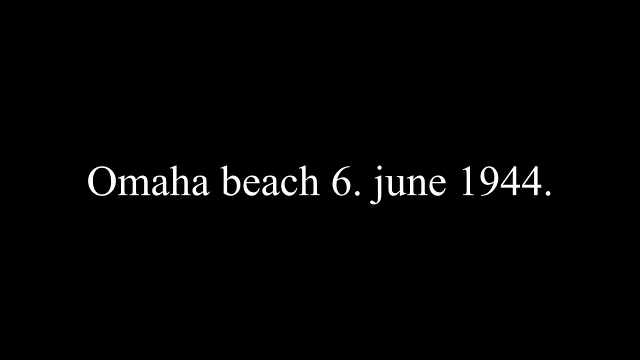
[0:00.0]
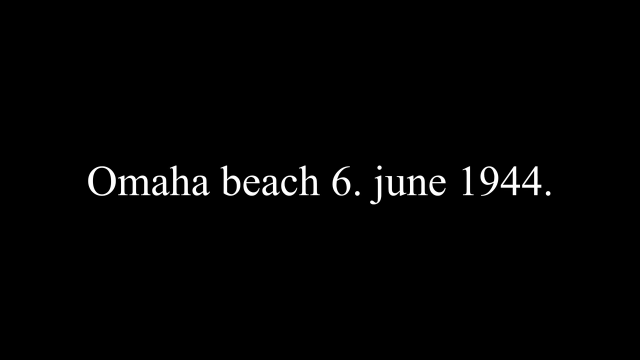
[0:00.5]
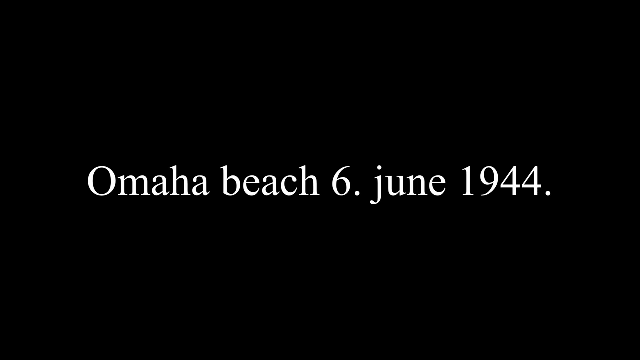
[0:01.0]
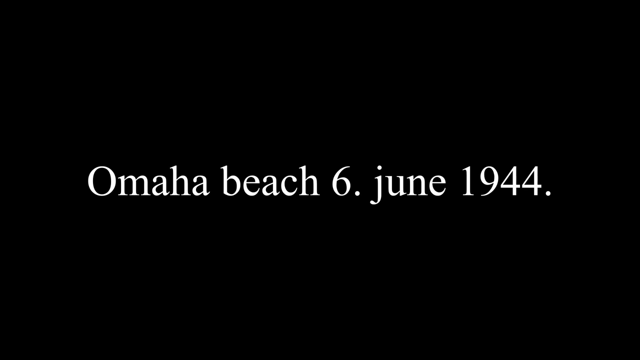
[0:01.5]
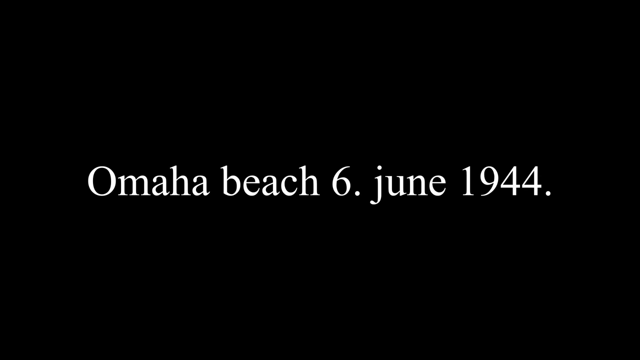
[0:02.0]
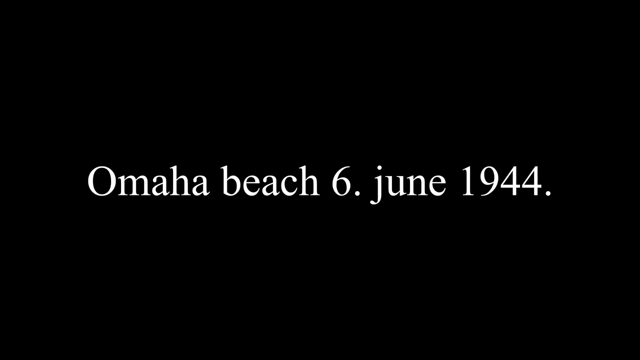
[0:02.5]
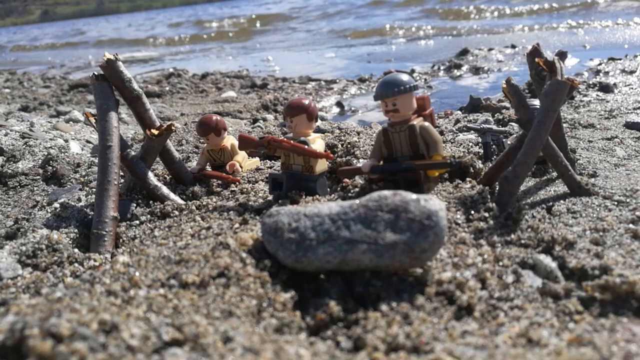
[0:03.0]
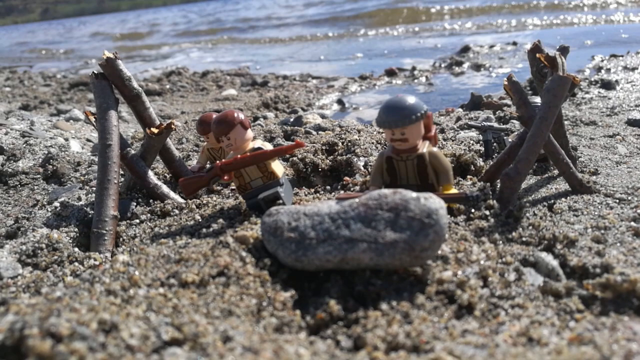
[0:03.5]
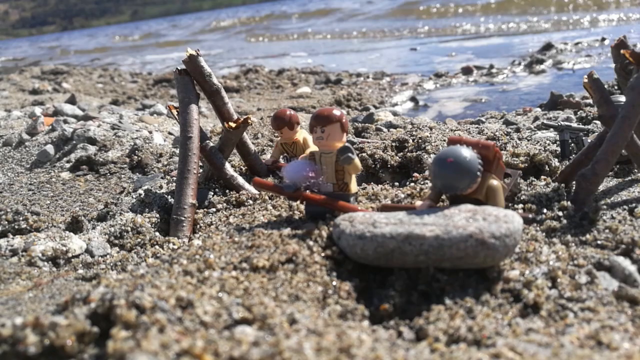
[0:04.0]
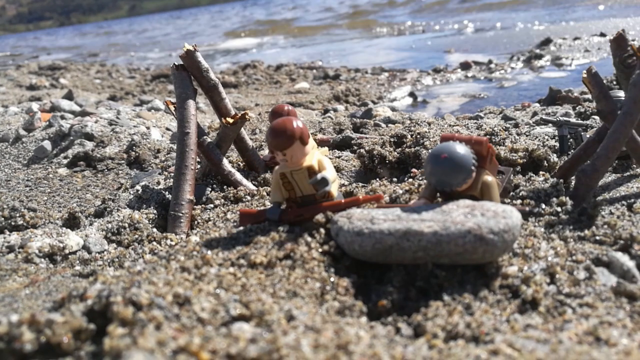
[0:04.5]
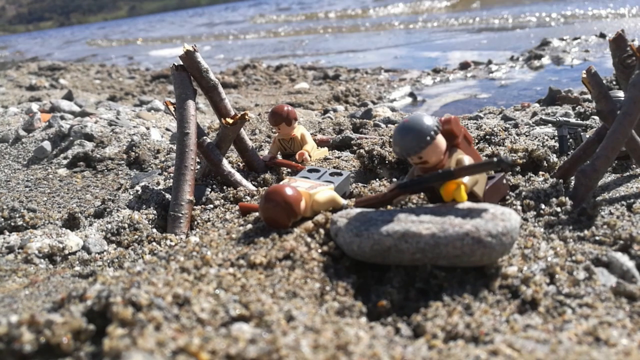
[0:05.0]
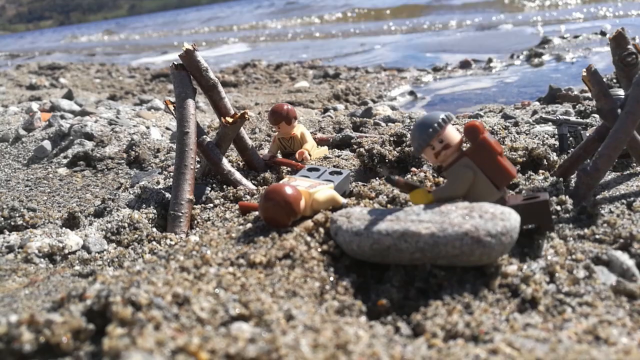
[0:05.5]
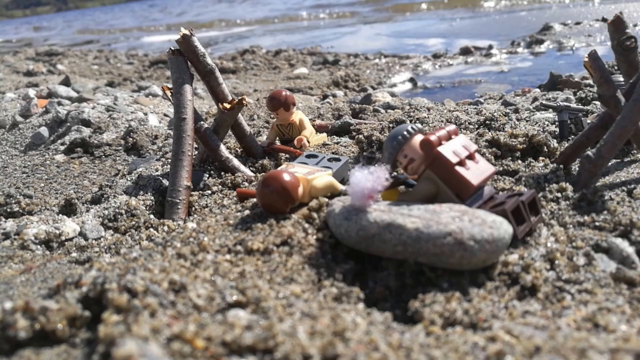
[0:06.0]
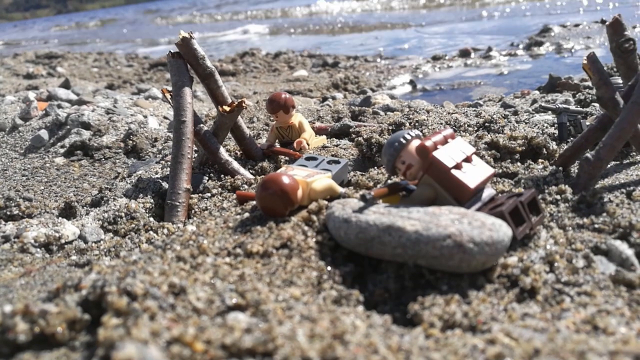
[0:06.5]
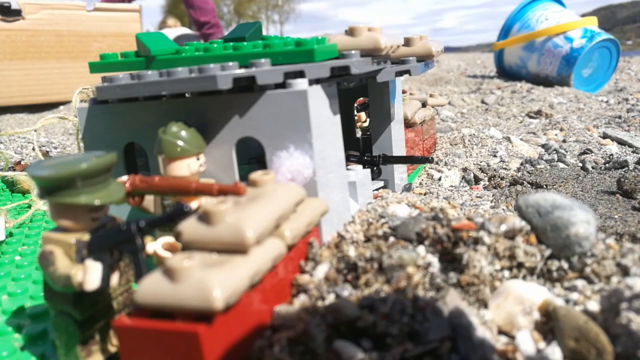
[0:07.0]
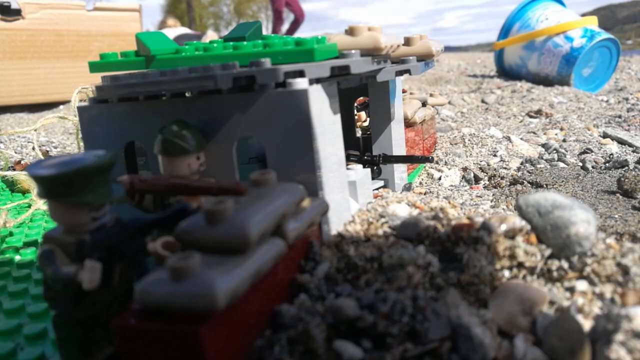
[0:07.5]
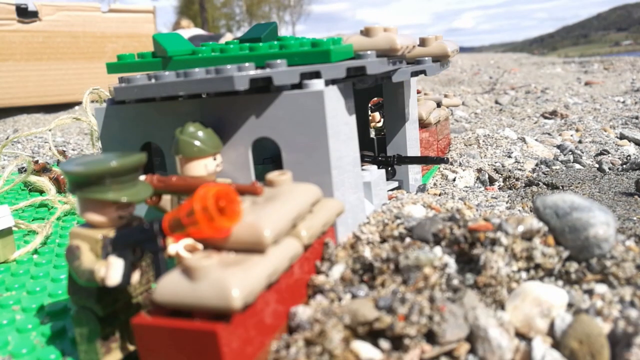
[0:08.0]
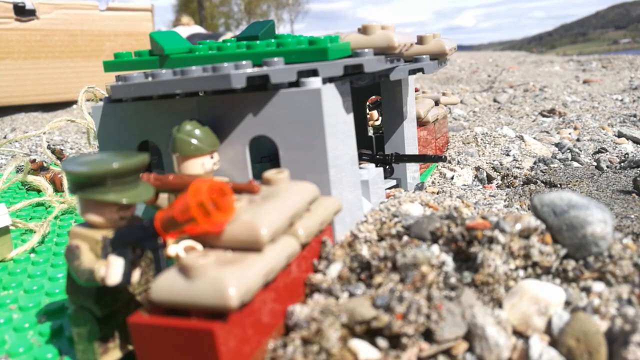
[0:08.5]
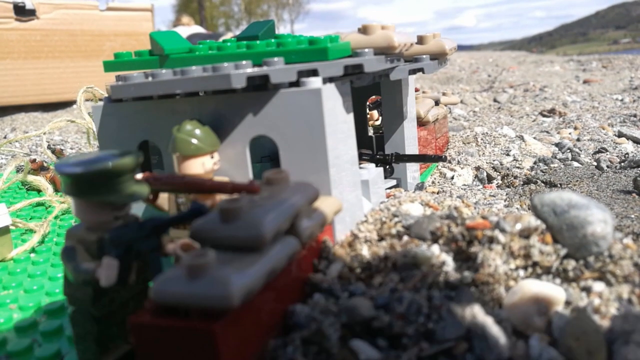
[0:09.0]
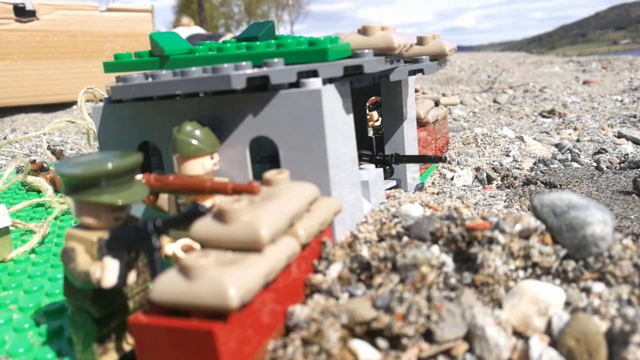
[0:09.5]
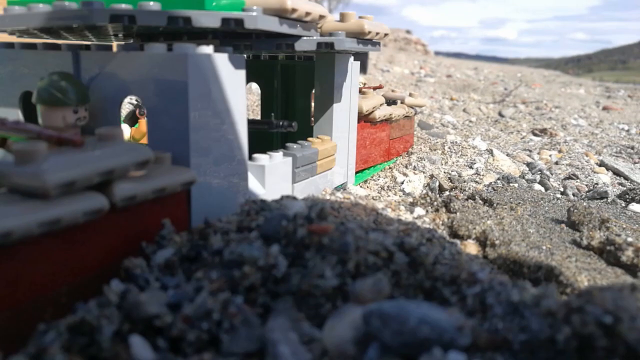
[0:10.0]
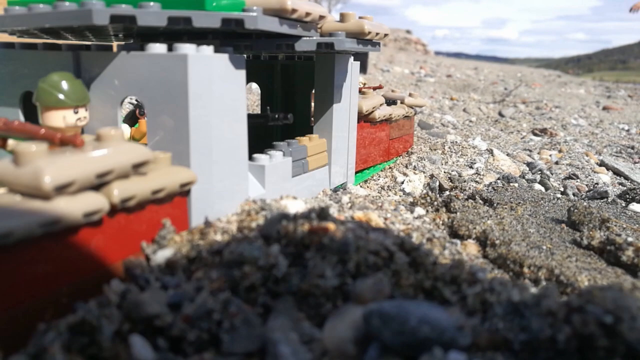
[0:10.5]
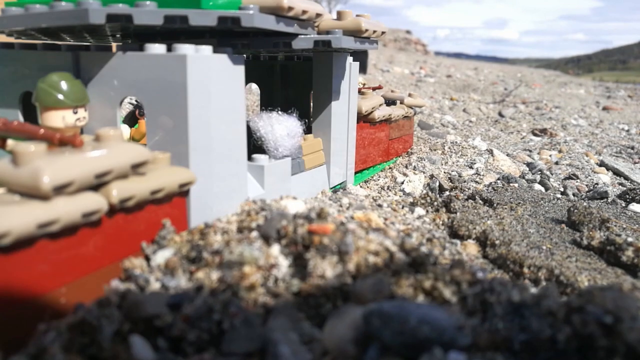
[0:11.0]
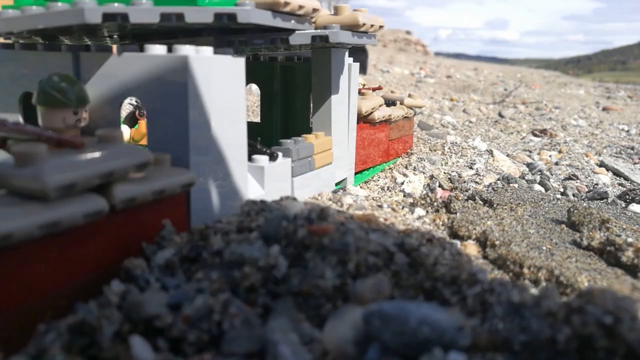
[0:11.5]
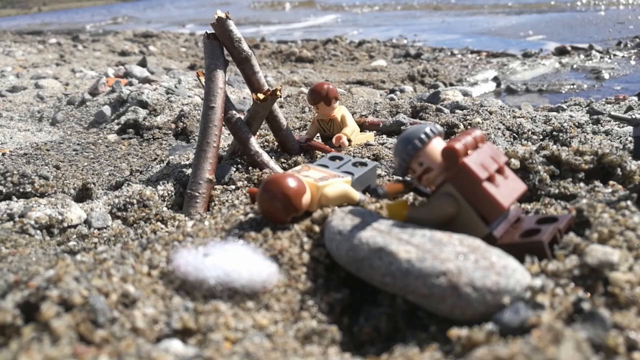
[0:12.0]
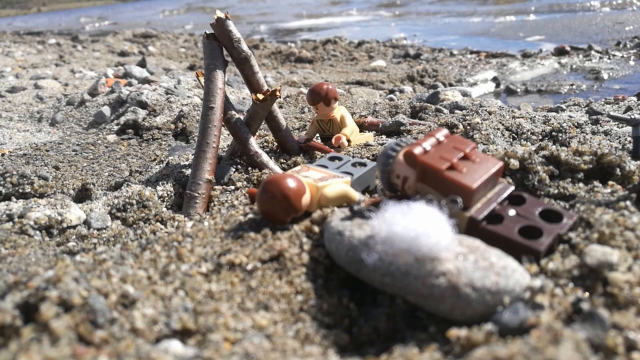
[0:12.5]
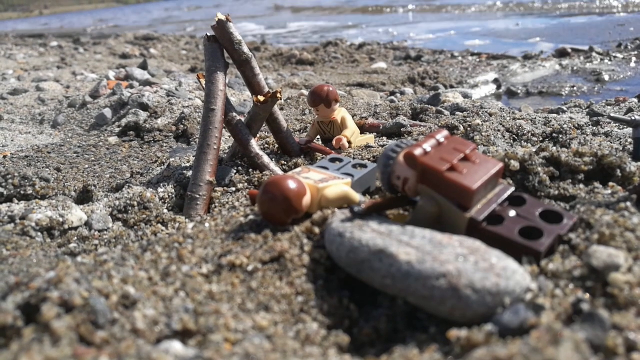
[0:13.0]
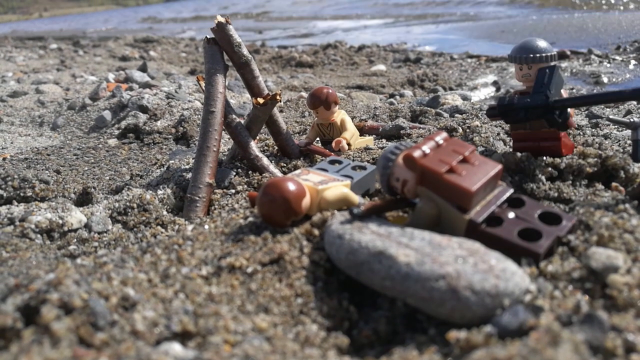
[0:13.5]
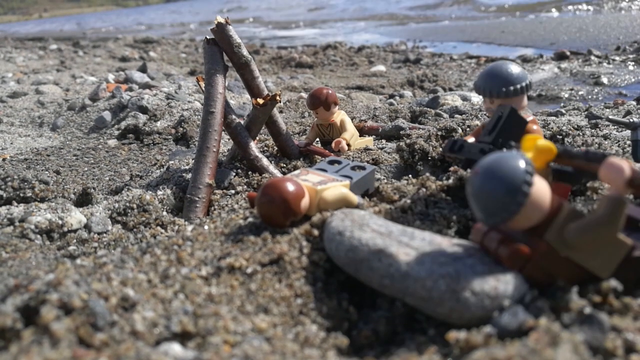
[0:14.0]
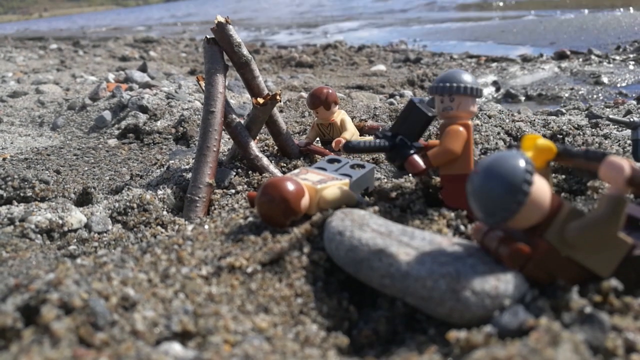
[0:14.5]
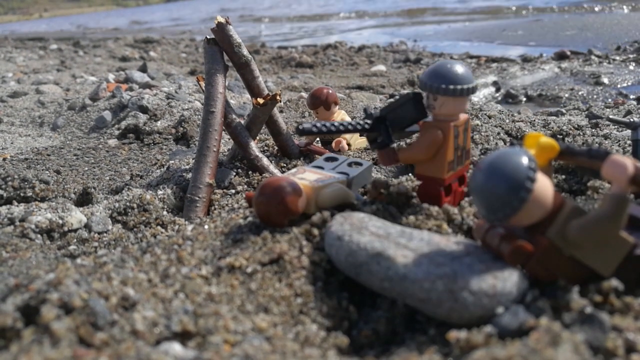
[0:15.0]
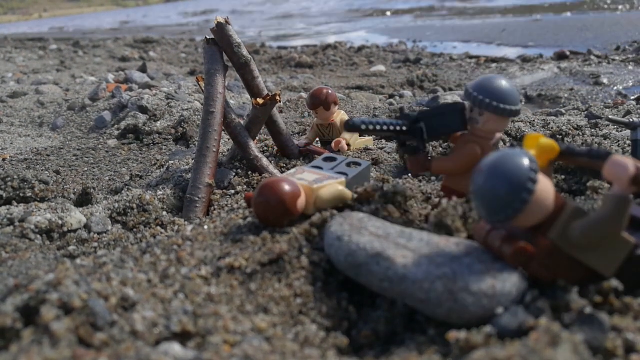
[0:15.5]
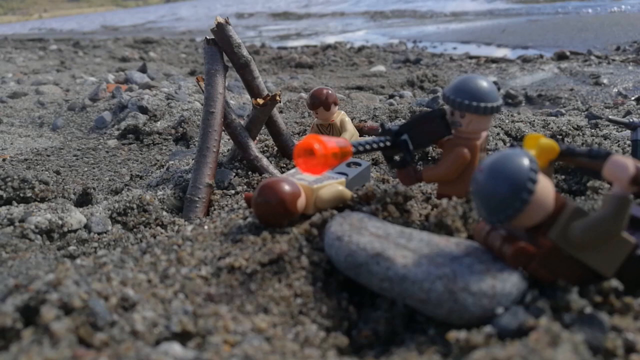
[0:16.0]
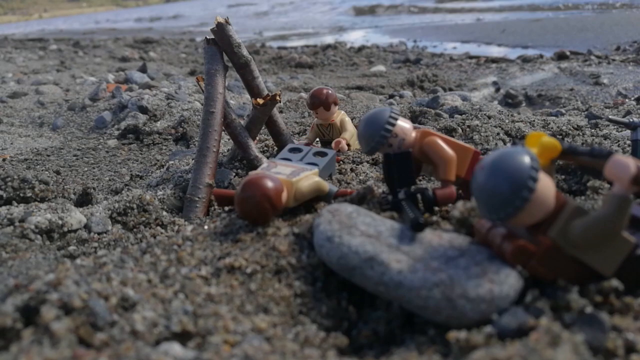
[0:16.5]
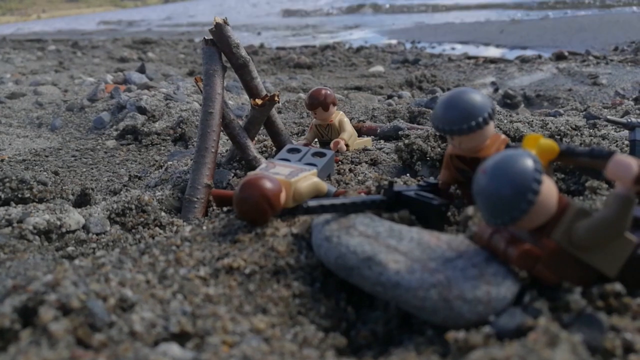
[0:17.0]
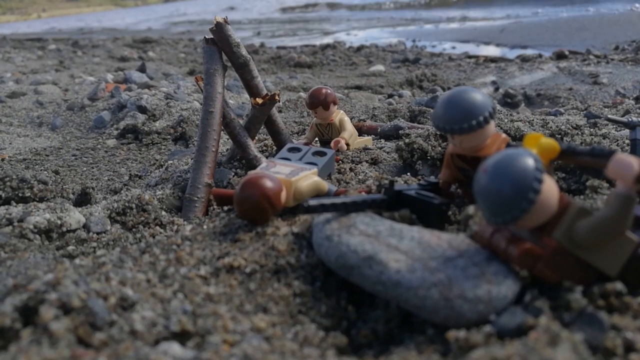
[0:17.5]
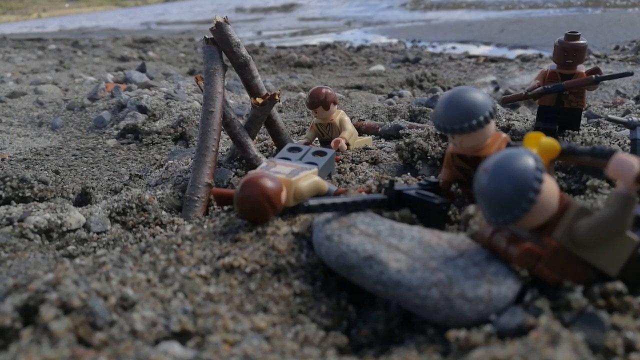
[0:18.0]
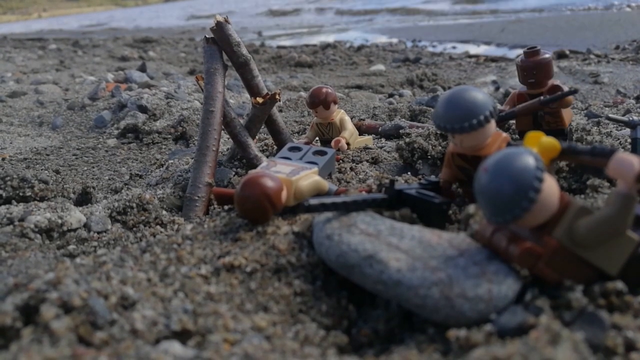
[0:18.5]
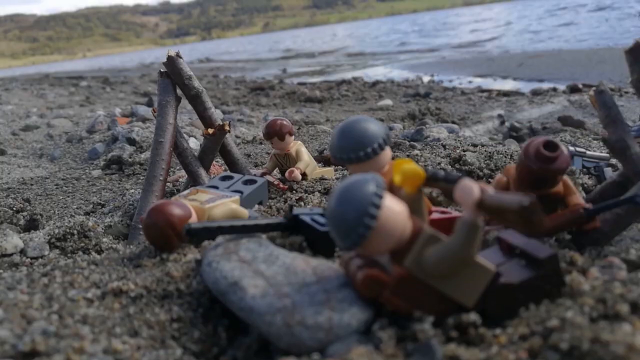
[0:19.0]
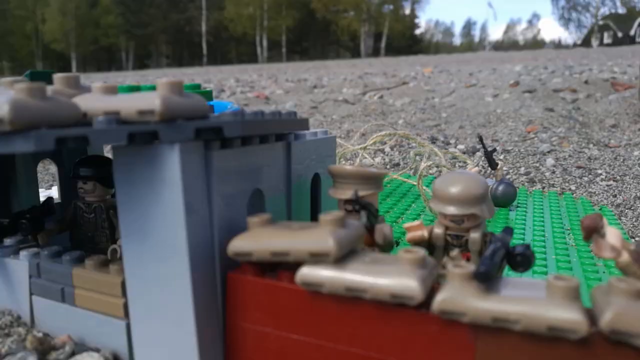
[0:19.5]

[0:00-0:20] The video opens with simple white text on a plain black background reading "Omaha Beach 6th of June 1944". This turns into a diorama scene with little plastic Lego men coming up on a beach. Twigs represent tank trap obstacles, and three little Lego men in military uniforms have landed on the beach and are trying to work their way up the shore. One of them is shot and goes down. The scene cuts to a Lego-built bunker complex, presumably the Germans' position. A child's sand castle beach bucket is in the background, along with a little bunker building with a green roof and some Germans in badly mixed uniforms. The officers wear green caps, and the Germans have some kind of plastic rifles. Men advance and fire in the direction of the Germans as more figures arrive.